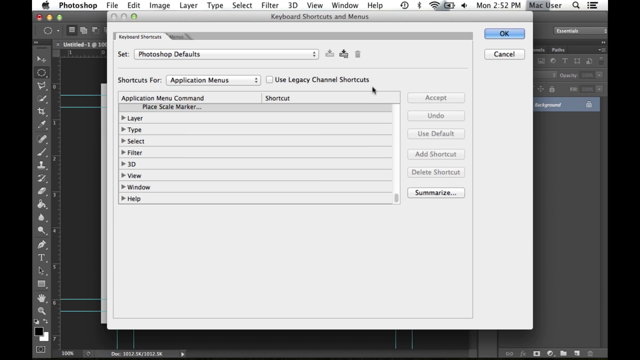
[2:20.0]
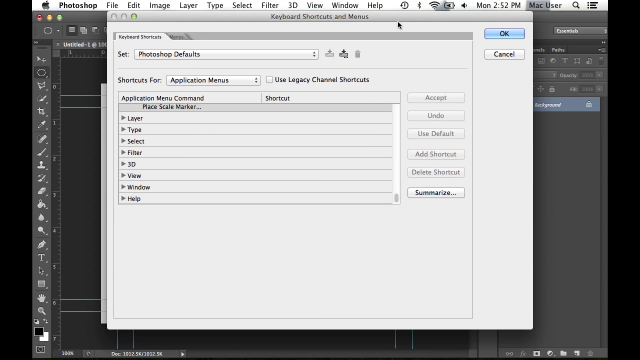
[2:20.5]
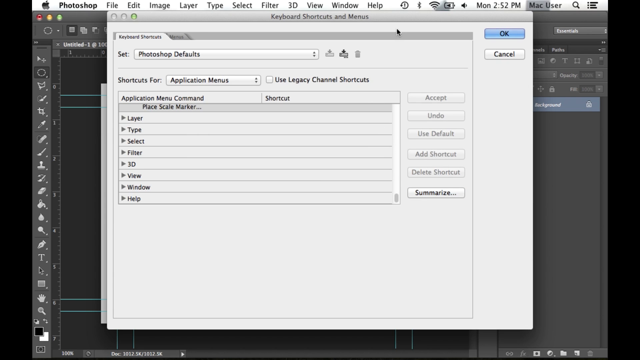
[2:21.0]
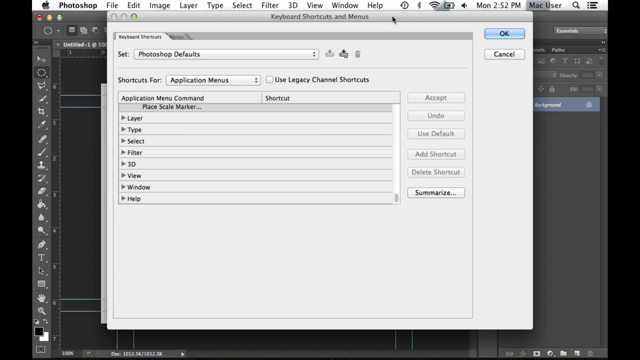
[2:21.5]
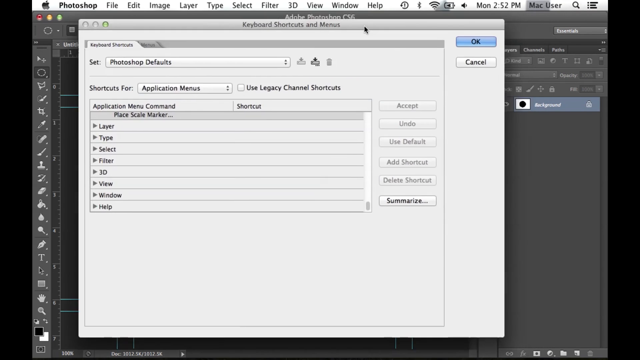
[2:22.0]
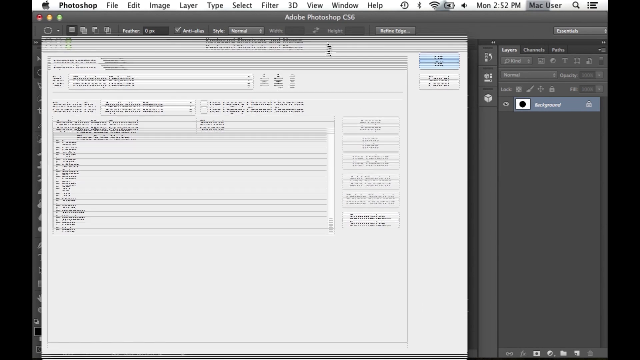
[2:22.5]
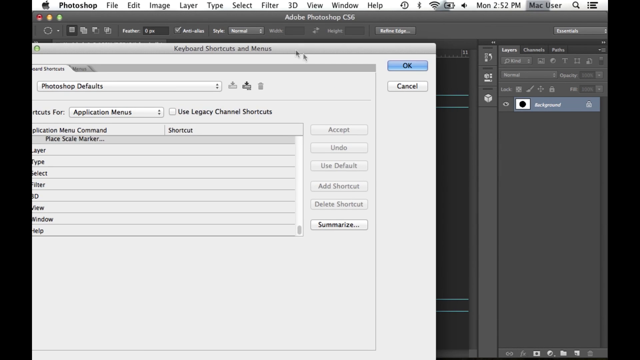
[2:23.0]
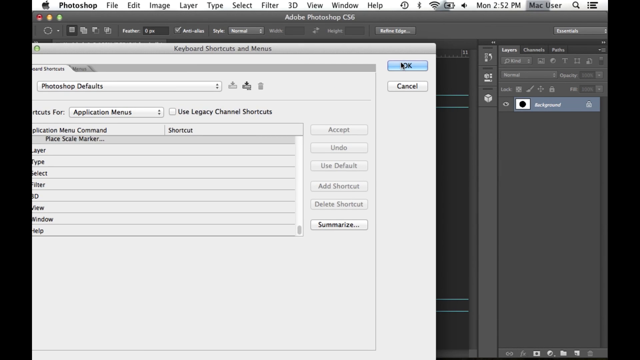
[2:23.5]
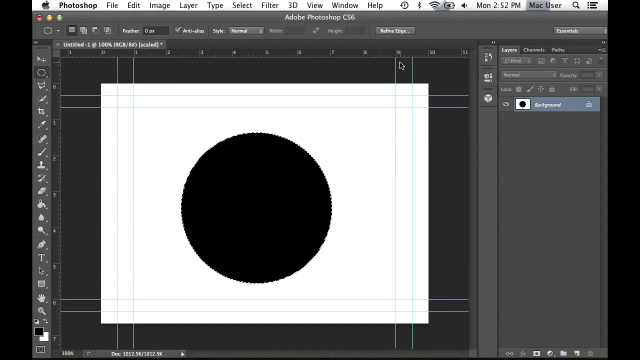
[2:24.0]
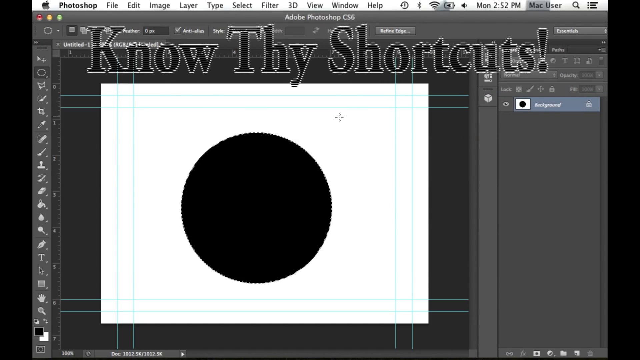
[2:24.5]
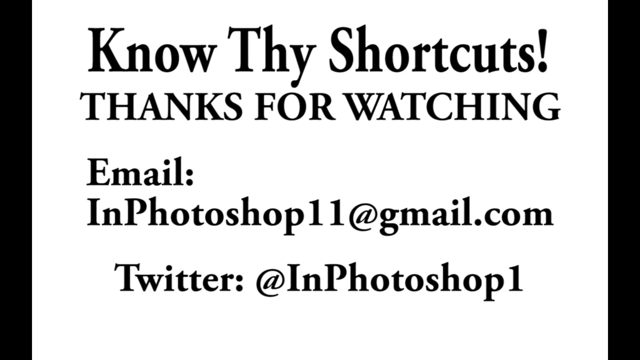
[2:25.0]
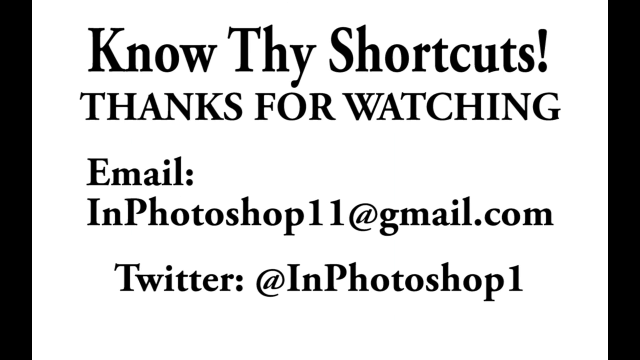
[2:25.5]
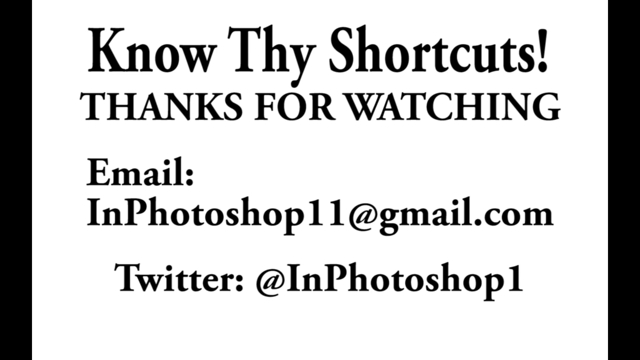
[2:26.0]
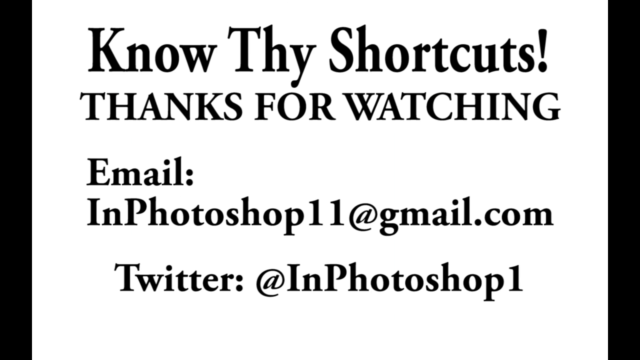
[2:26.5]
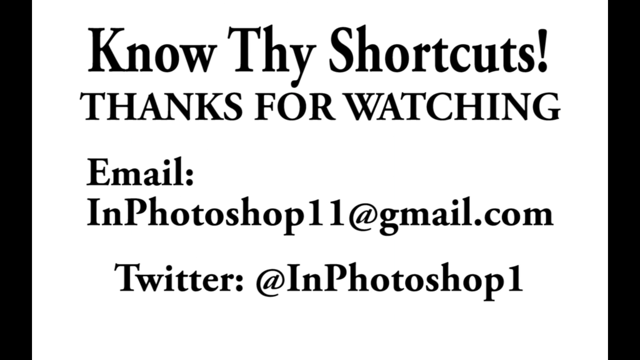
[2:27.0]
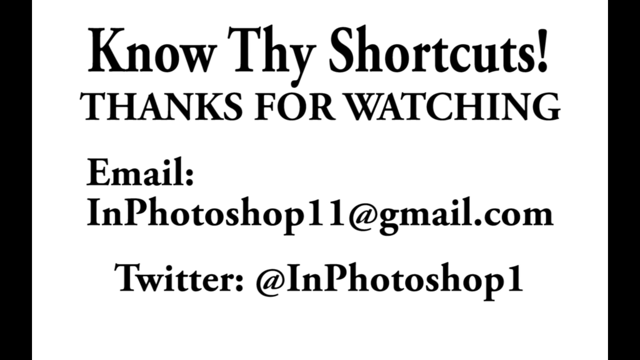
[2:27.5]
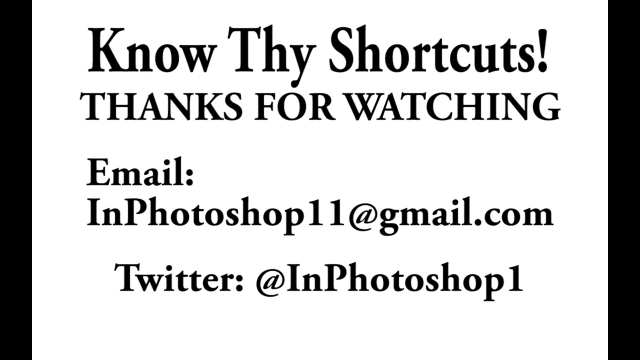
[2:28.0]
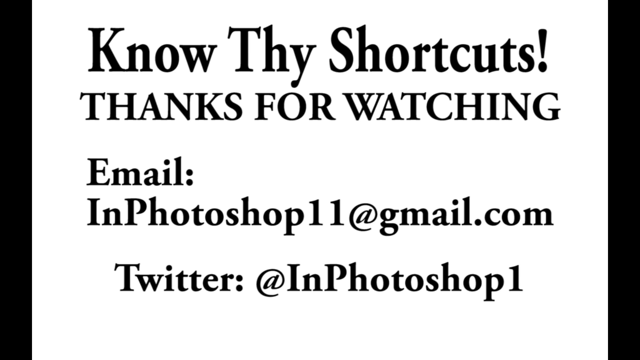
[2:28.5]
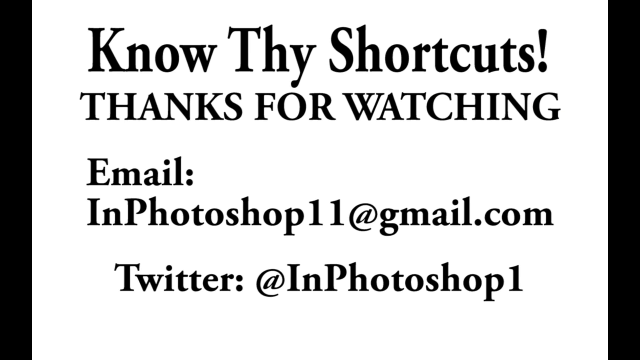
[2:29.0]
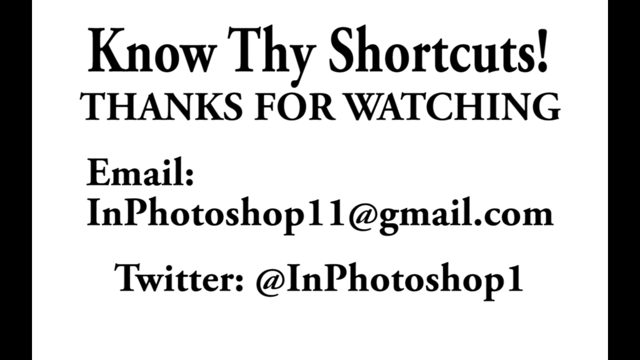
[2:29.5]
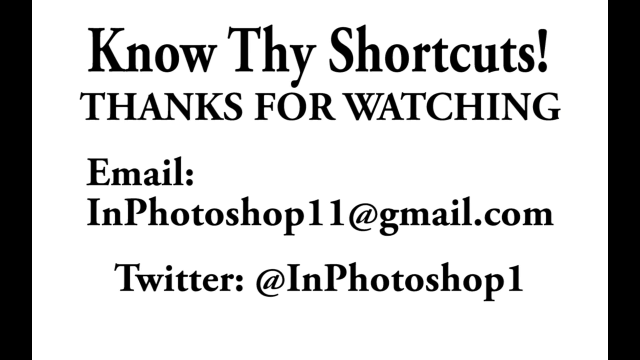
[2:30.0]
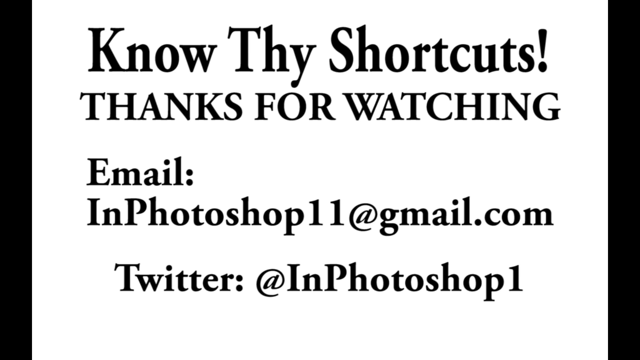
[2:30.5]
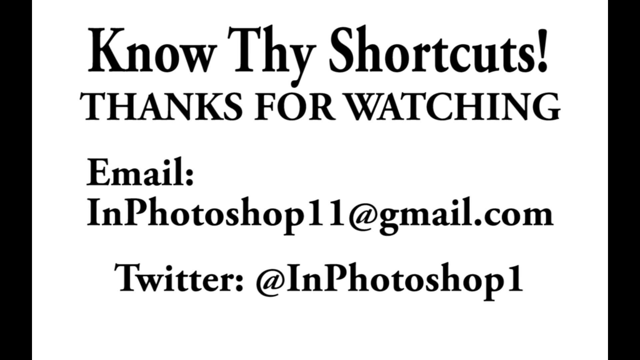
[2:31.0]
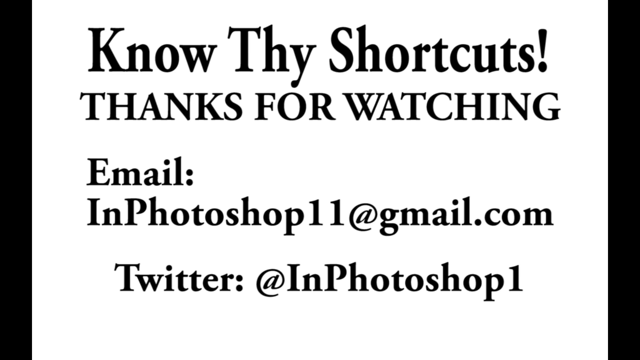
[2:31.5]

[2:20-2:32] The video is a little wider than it is tall, letterboxed on the left and right by about 5% each, and shows someone's desktop running macOS, evident from the Apple icon at the top and the word "Photoshop" to its right, followed by the menu options File, Edit, Image, Layer, Type, Select, Filter, 3D, View, Window and Help. Below that, the keyboard shortcuts and menus window is open, and OK is clicked. The view goes to an image with a big black dot in the middle, then to a plain white page that says "Know thy shortcuts. Thanks for watching." An email address and a Twitter account are listed.